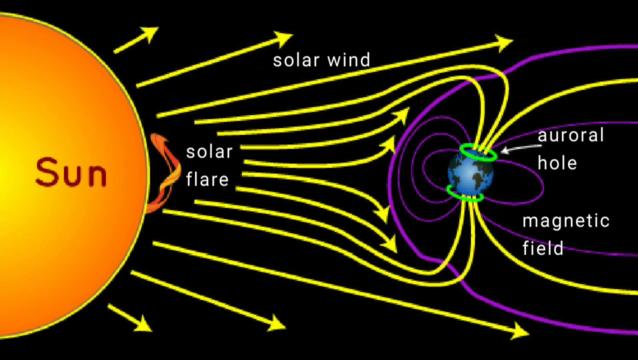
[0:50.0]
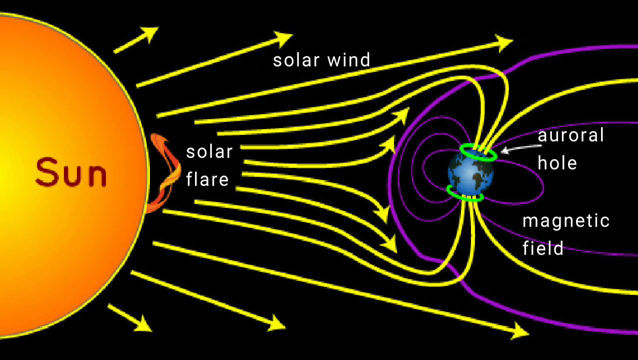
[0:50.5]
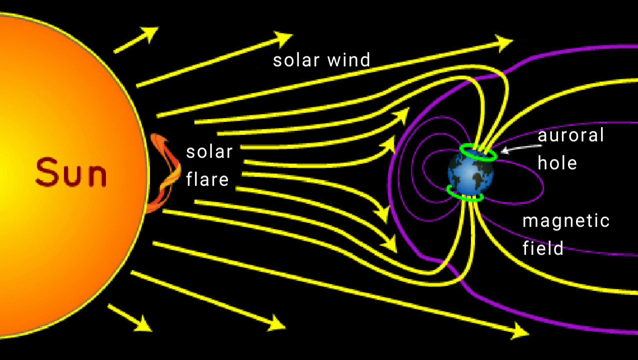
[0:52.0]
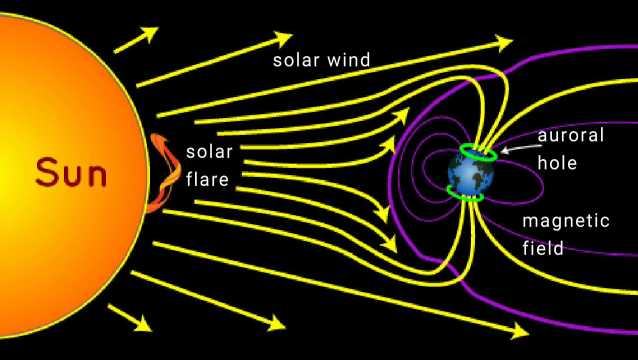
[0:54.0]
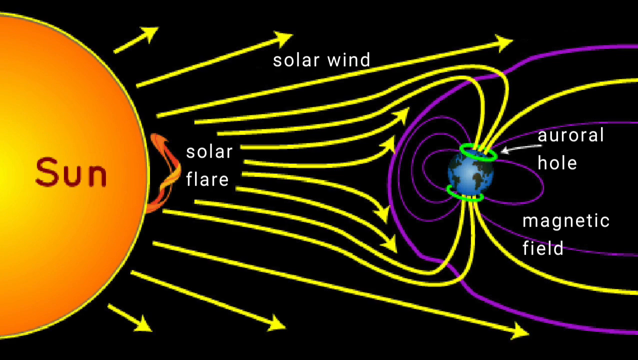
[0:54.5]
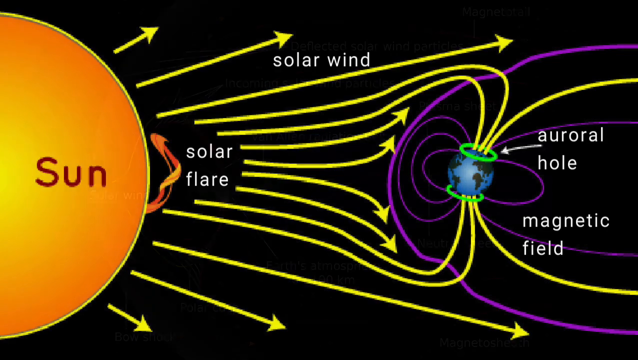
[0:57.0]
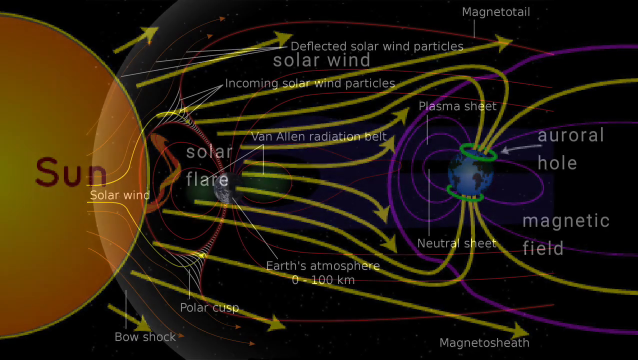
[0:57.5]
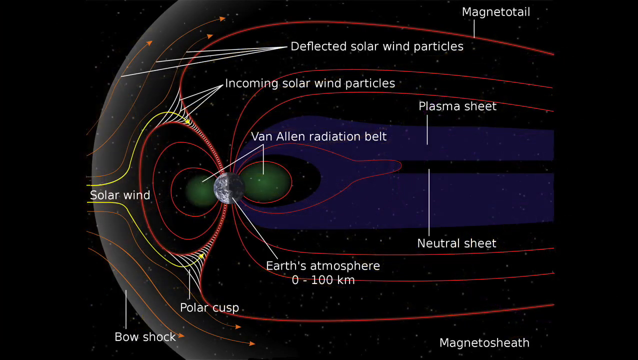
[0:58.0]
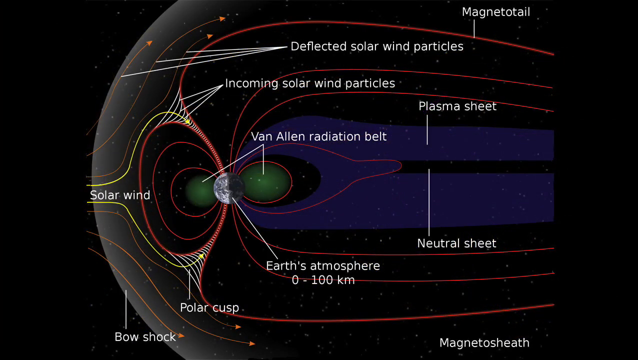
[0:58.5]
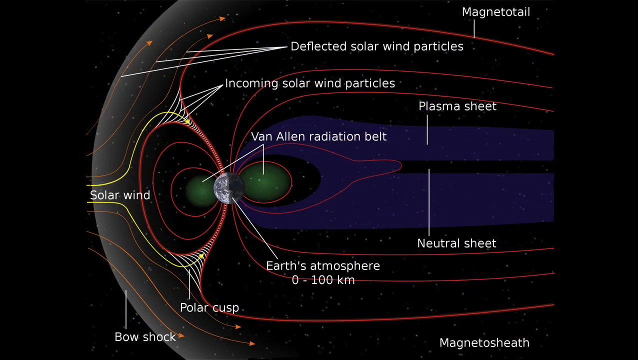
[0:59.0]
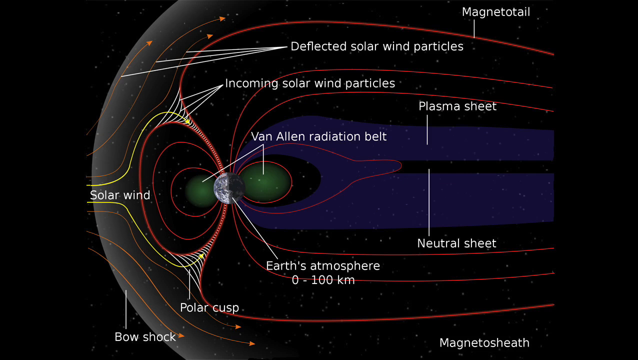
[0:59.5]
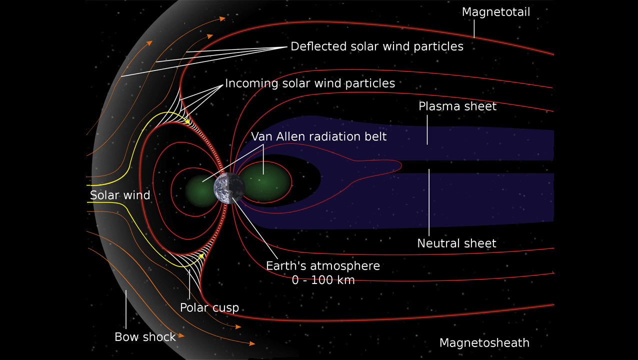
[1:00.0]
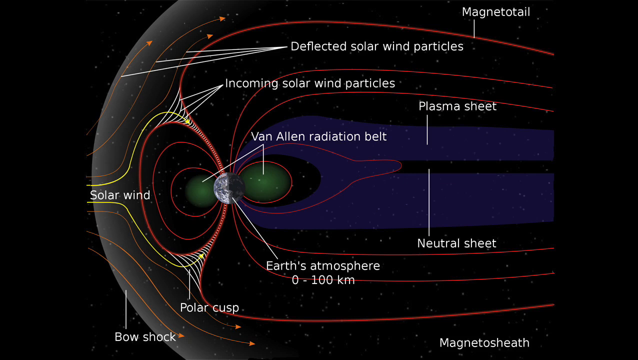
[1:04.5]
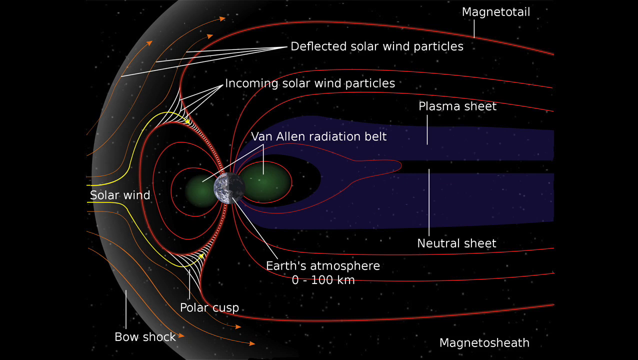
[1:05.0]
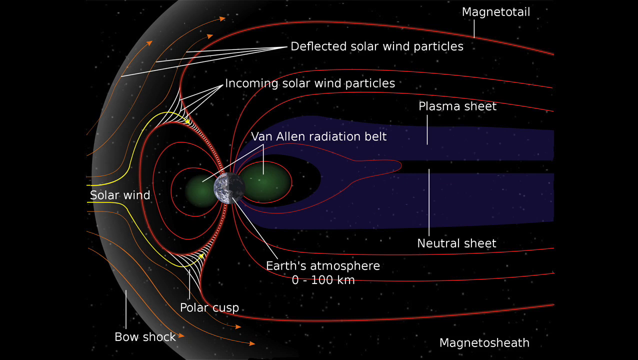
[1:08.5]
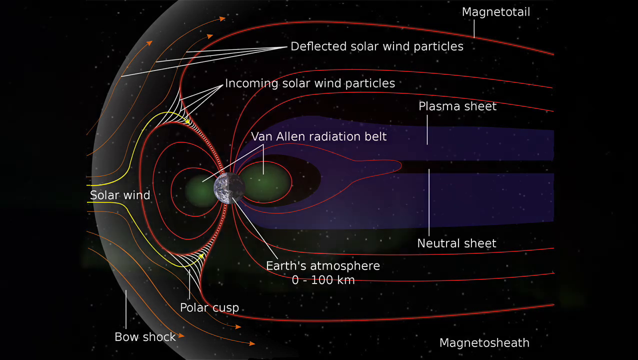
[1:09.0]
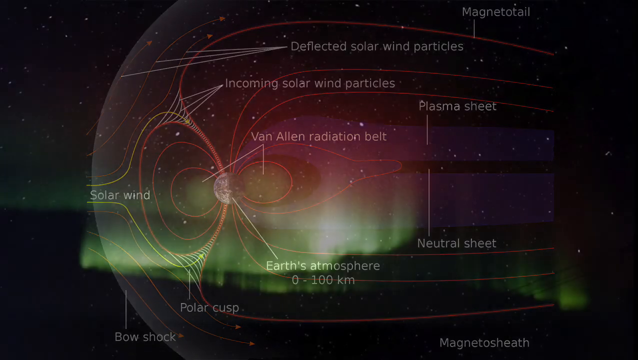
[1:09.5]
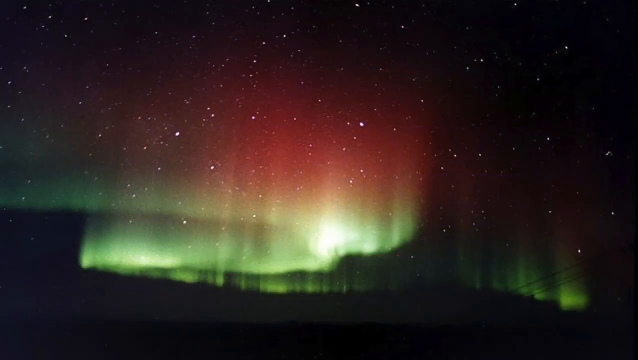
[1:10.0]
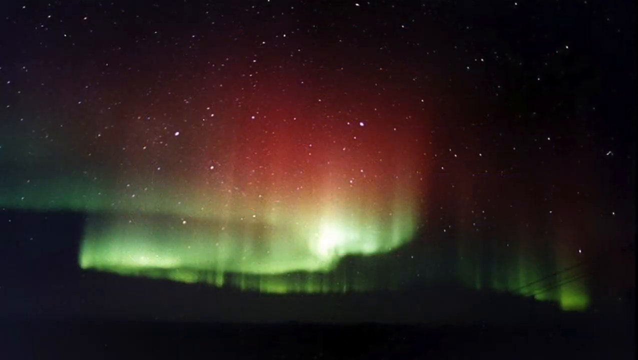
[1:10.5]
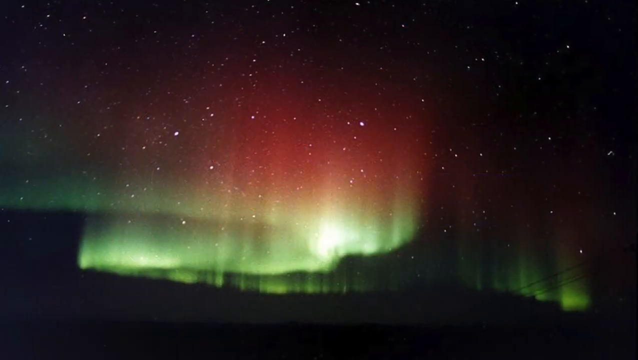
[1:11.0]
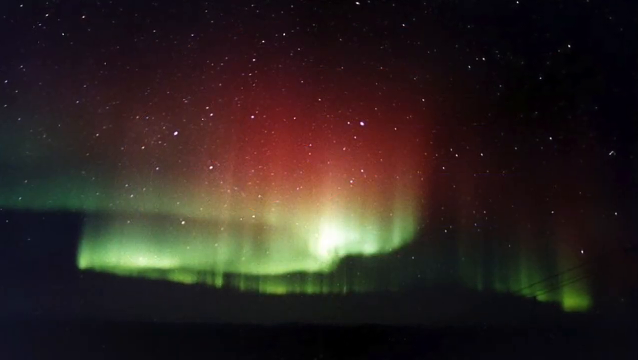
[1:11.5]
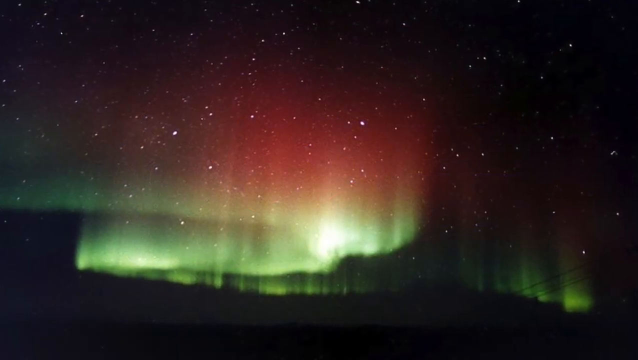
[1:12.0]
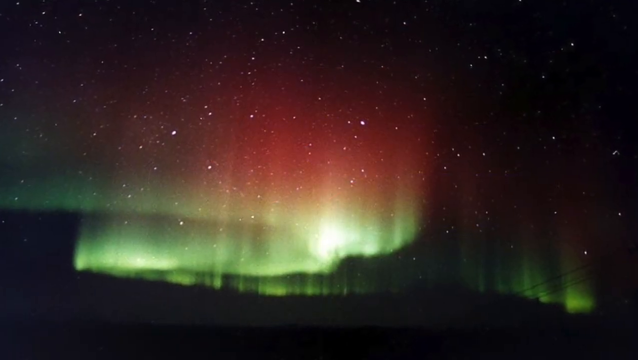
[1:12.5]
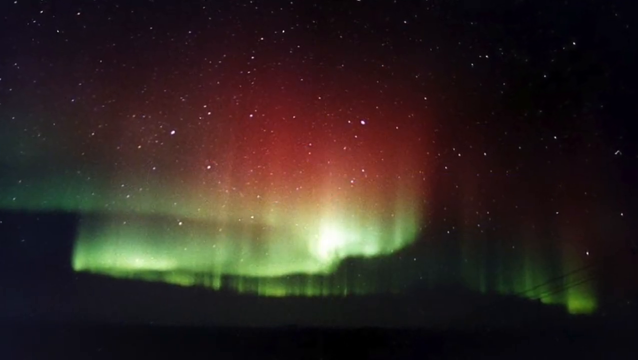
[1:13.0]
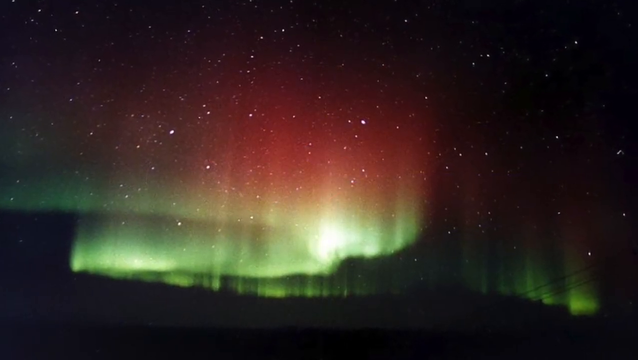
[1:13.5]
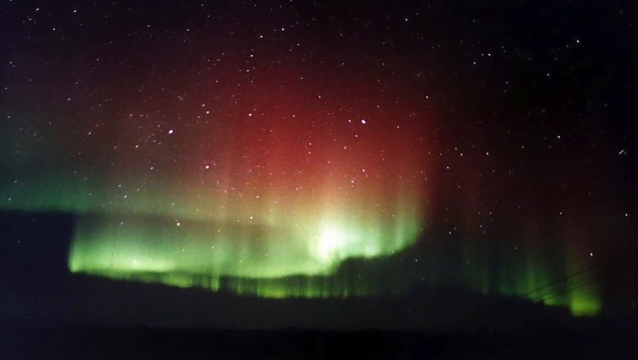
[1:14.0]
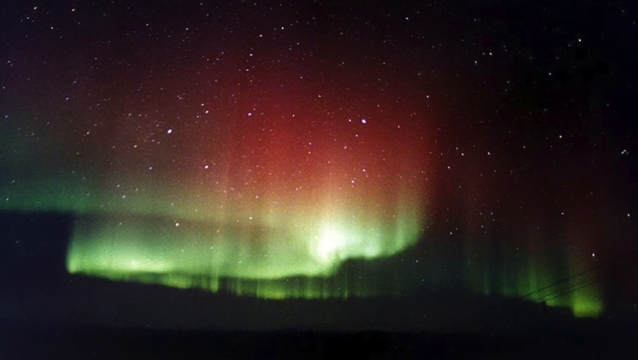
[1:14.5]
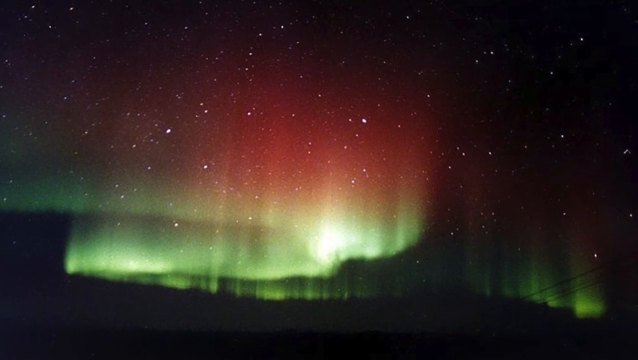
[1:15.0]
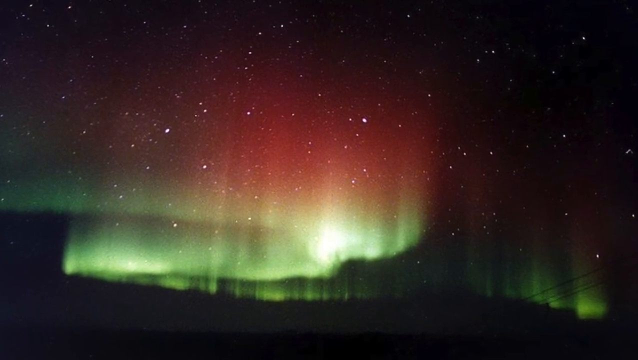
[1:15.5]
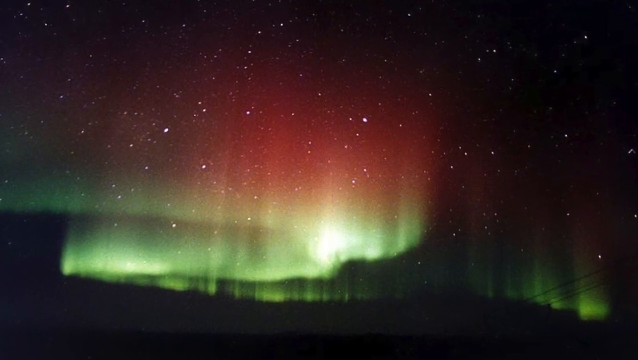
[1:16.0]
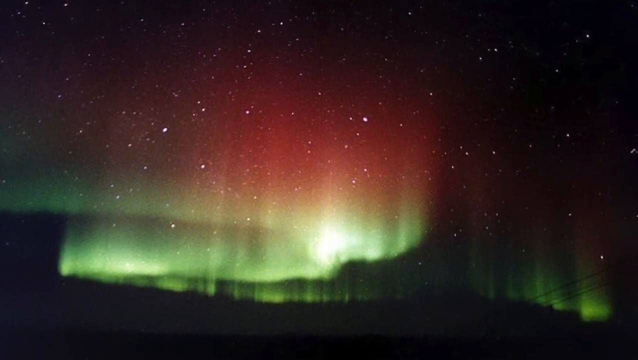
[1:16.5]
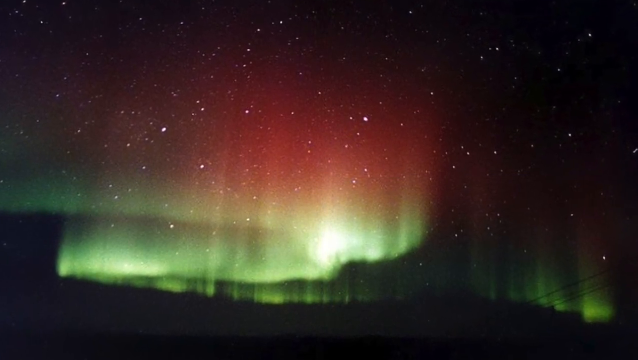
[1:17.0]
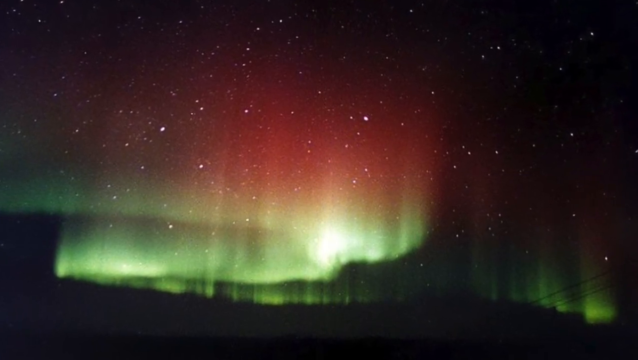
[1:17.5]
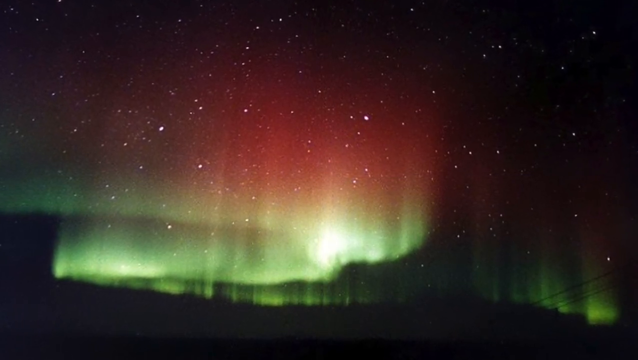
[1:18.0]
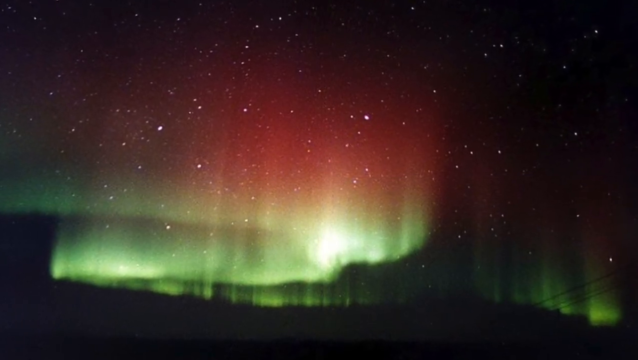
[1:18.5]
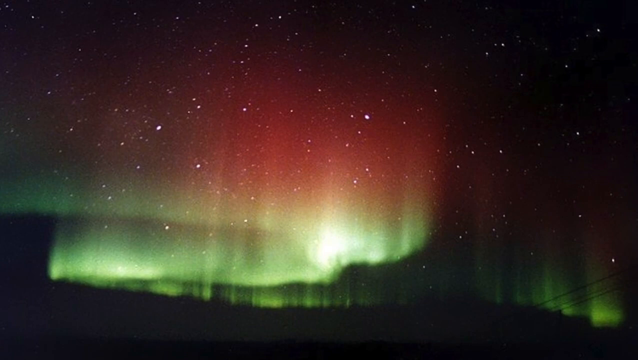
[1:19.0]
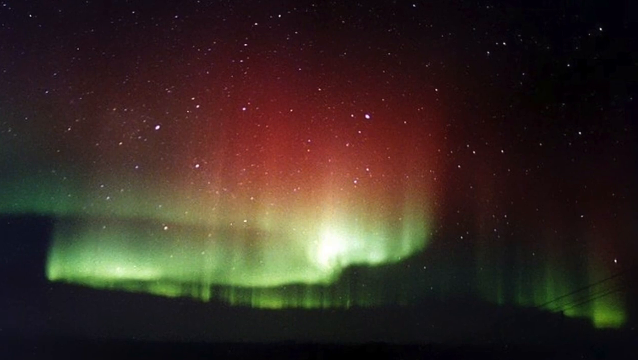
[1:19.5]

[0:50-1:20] The screen is filled with graphics. On the left, an orange semicircle covering almost the whole left side is labeled "sun". Yellow arrows move away from it, some pointing outward and some meeting at the center, with the text "solar flare" between them. Where the arrows meet, they meet purple lines, some spherical and some curved, which diverge at that point. A miniature Earth-looking object has two green circles on top of it and is labeled "aurorial hole or magnetic field". Another graphic then pops up showing the solar wind moving toward the Earth, with several labels: a "plasma sheet" shown in purple, a "neutral sheet" between the purple sheet, and an "allen radiation belt" bordering the Earth's surface, along with a few orange lines and red curved and circular lines.